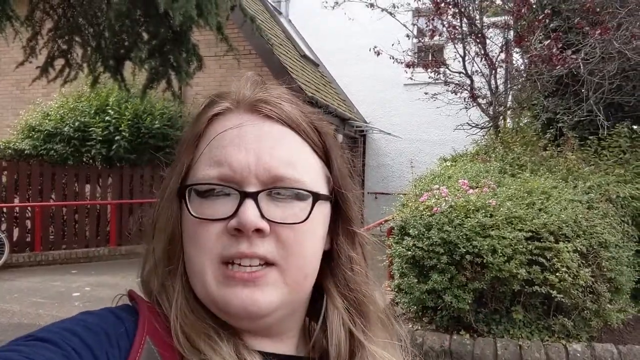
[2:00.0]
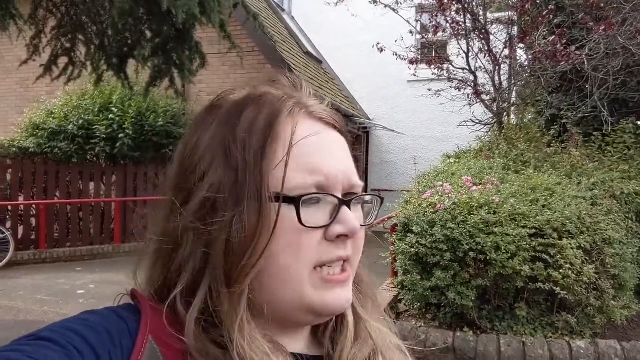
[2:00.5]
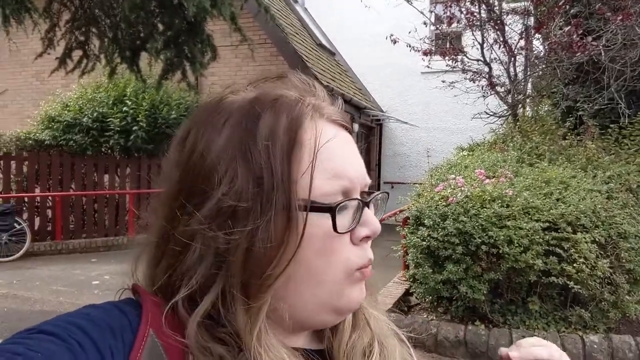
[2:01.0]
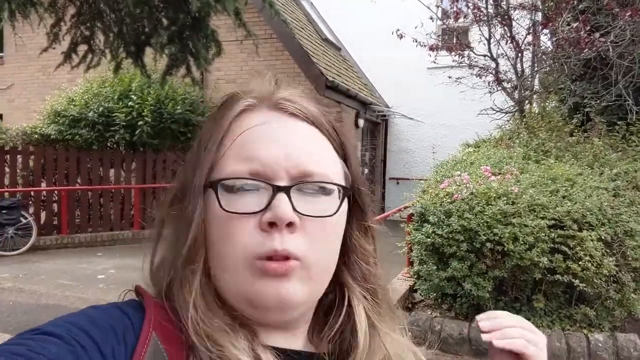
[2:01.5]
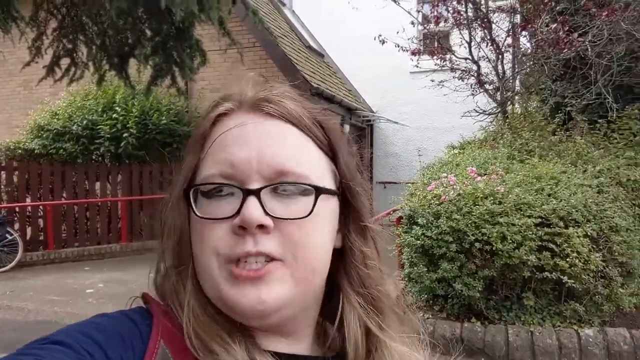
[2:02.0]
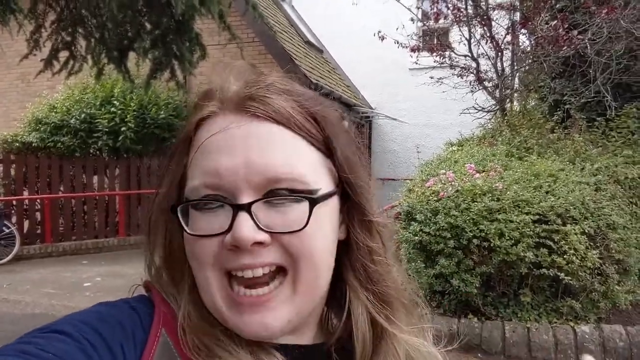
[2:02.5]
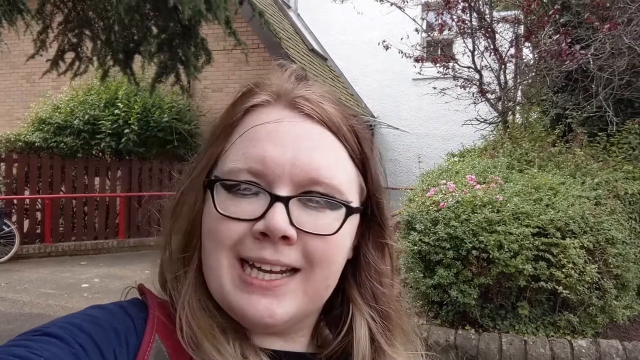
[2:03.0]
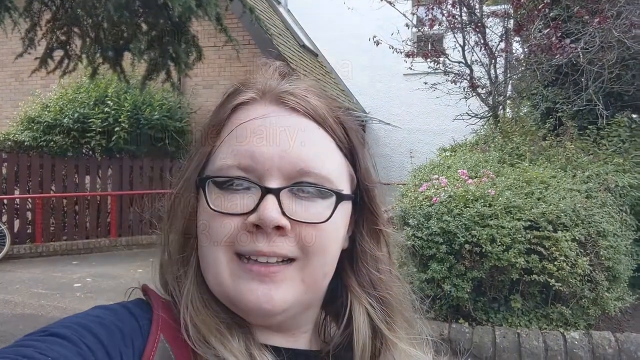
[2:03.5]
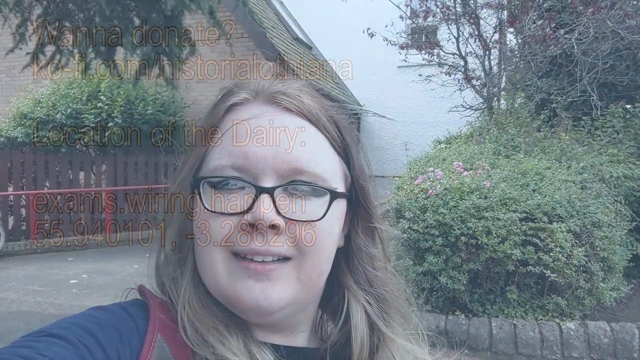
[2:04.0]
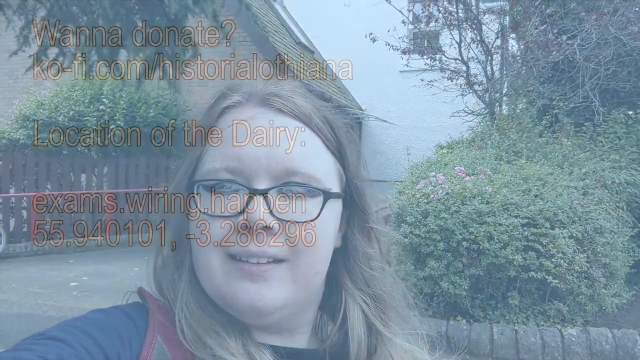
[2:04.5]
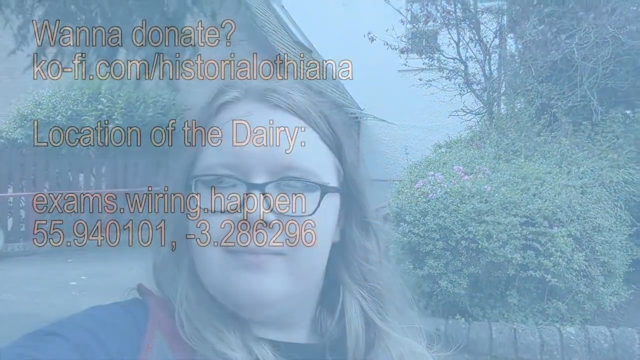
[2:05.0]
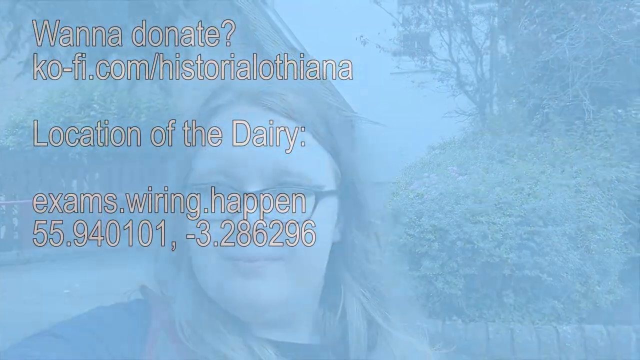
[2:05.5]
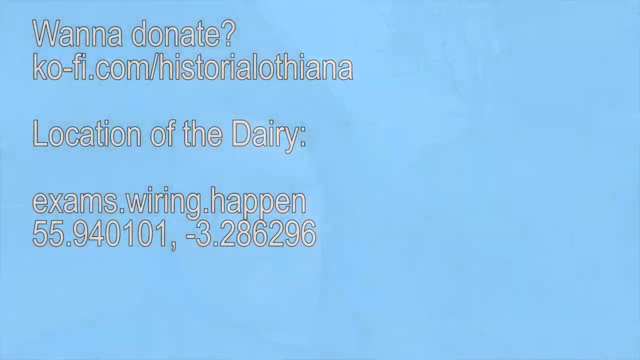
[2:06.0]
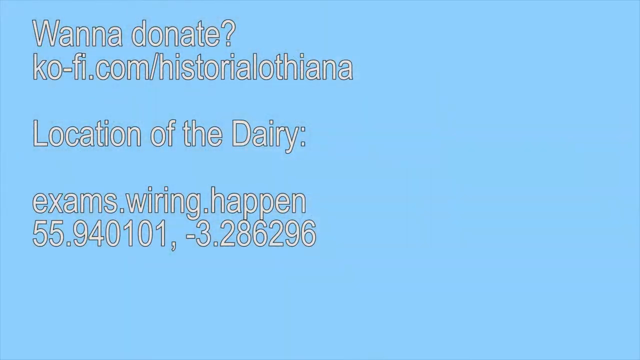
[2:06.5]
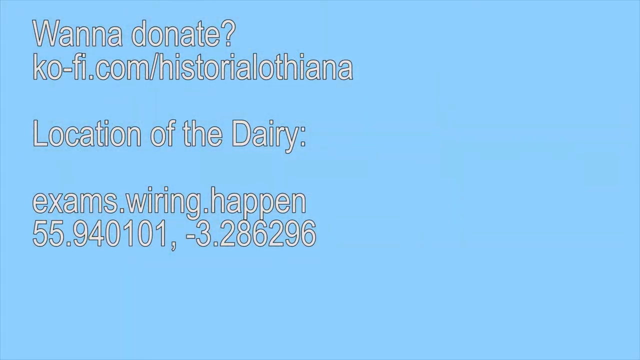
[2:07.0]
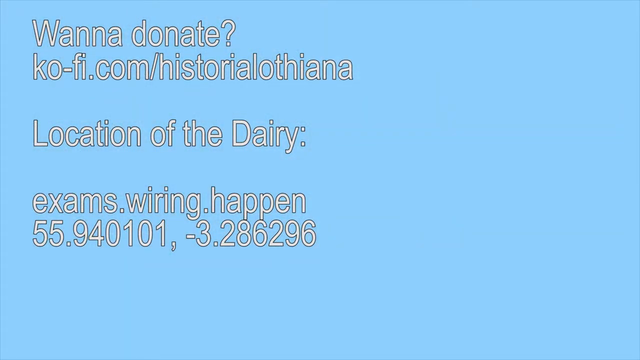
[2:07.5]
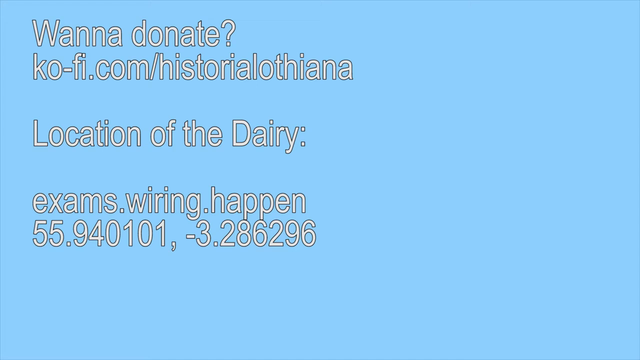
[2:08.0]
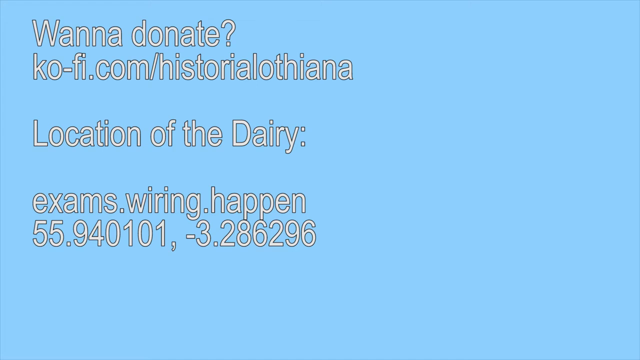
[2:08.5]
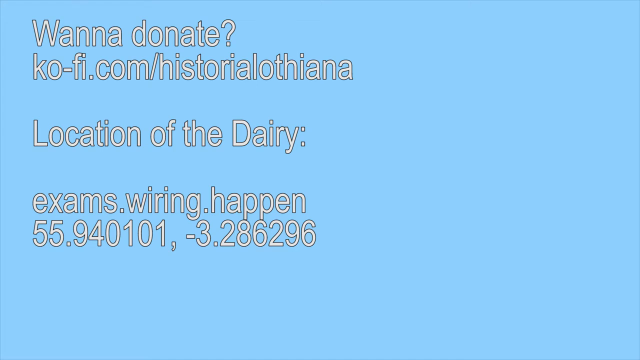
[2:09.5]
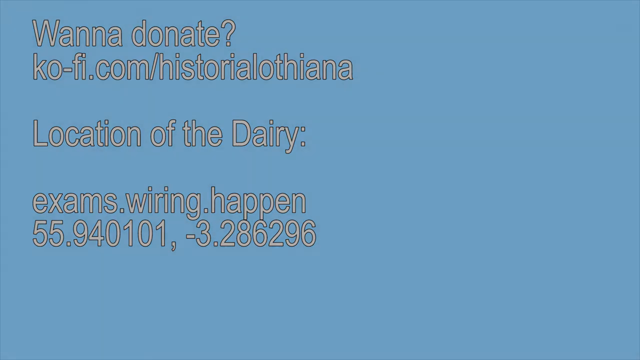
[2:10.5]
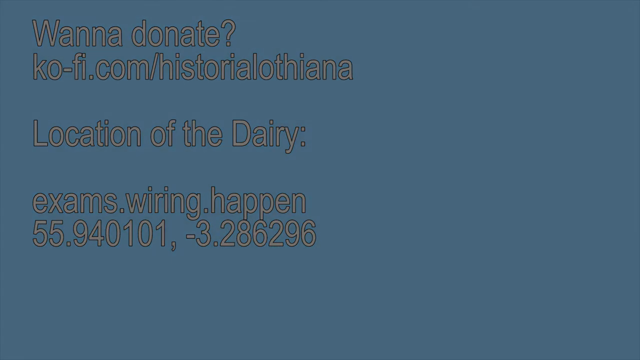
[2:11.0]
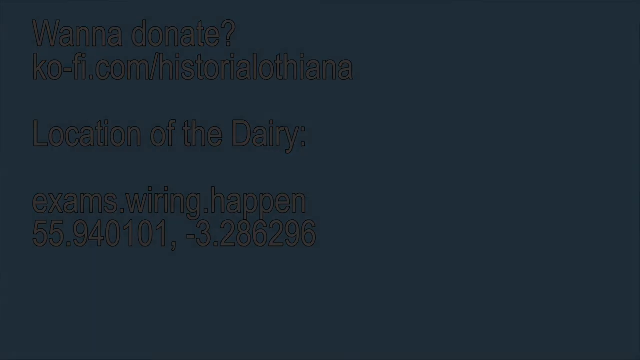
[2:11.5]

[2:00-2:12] The selfie video continues. It ends with a request for donations with a website address, and what appears to be a grid reference to the location of Corstorphine Dairy.